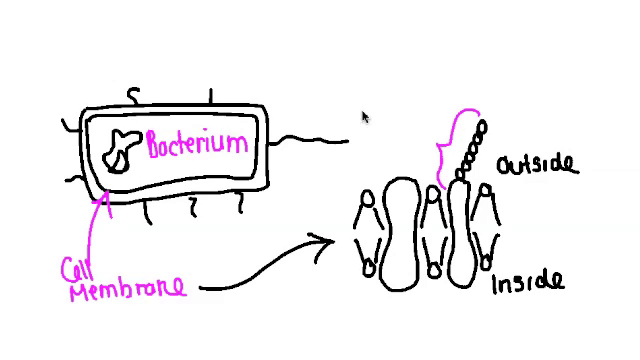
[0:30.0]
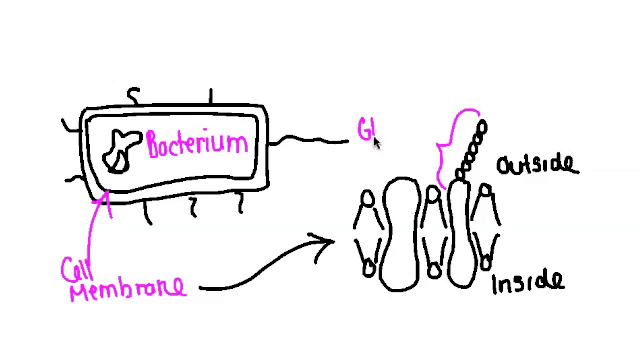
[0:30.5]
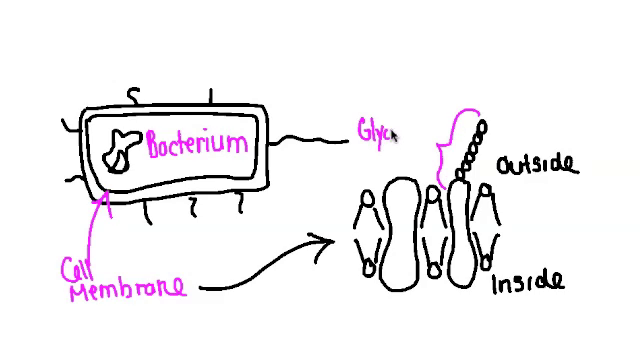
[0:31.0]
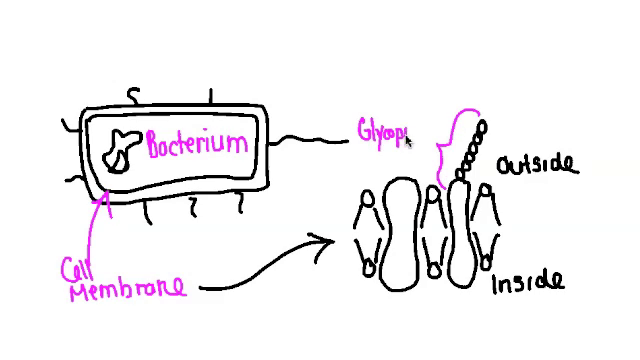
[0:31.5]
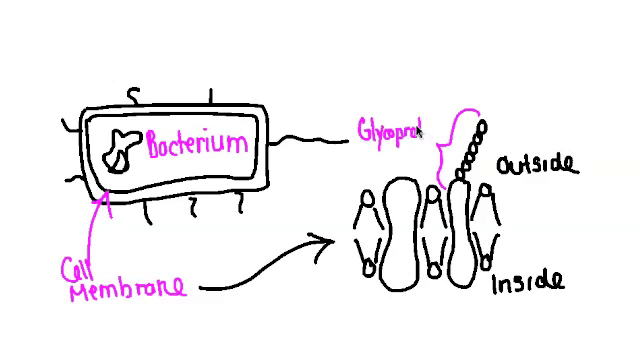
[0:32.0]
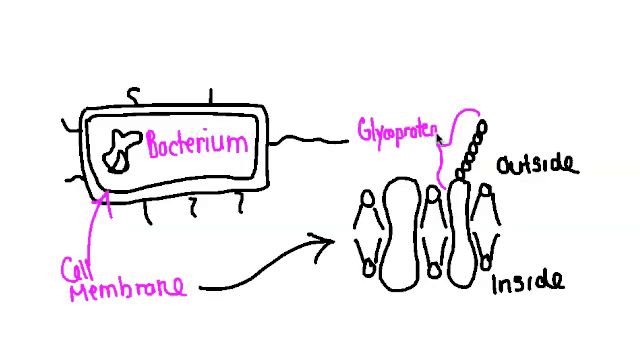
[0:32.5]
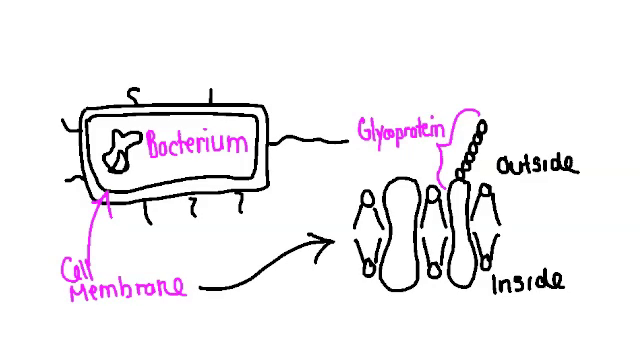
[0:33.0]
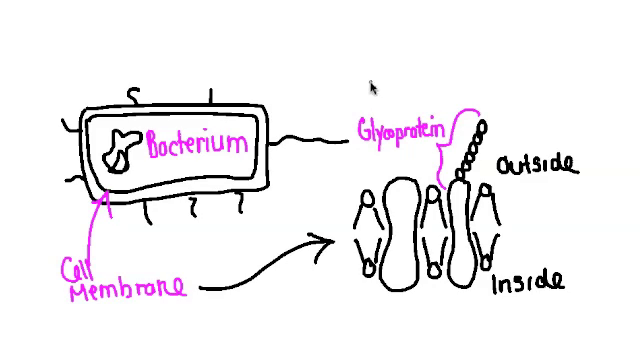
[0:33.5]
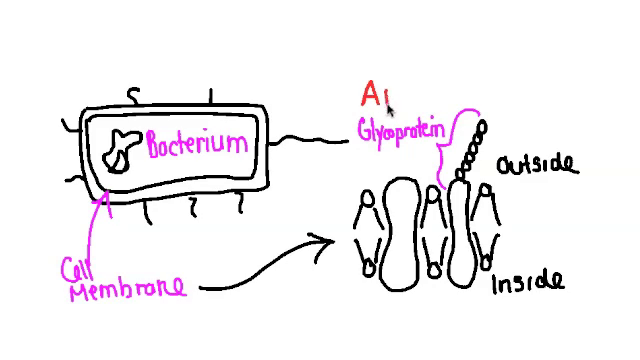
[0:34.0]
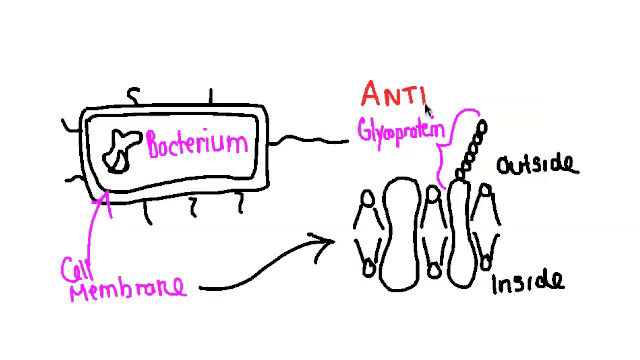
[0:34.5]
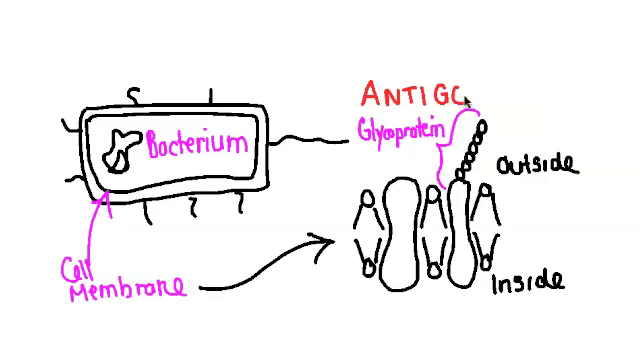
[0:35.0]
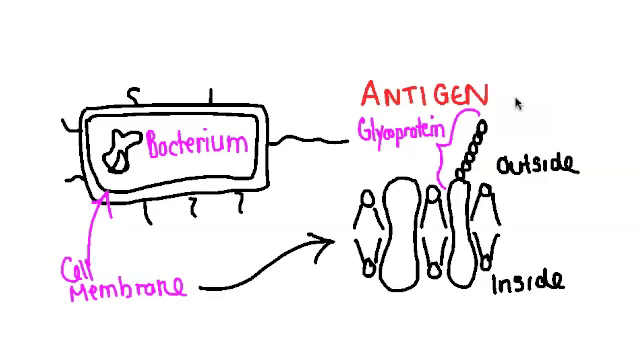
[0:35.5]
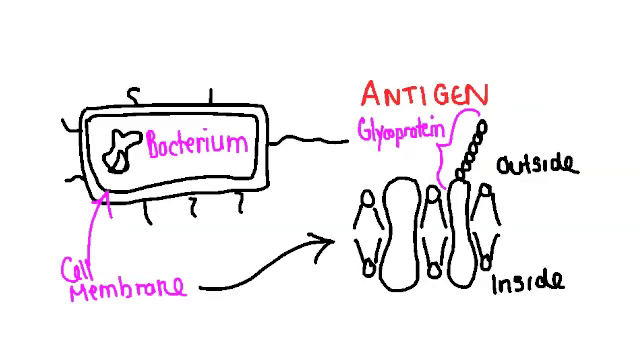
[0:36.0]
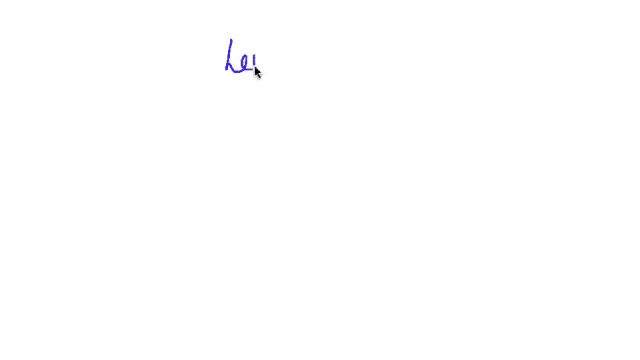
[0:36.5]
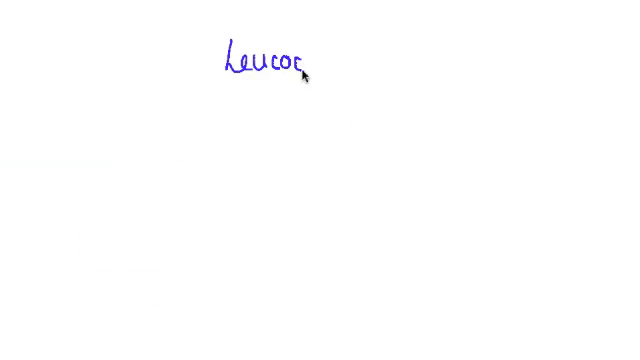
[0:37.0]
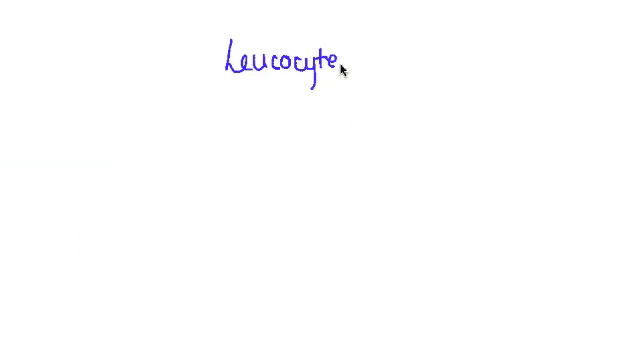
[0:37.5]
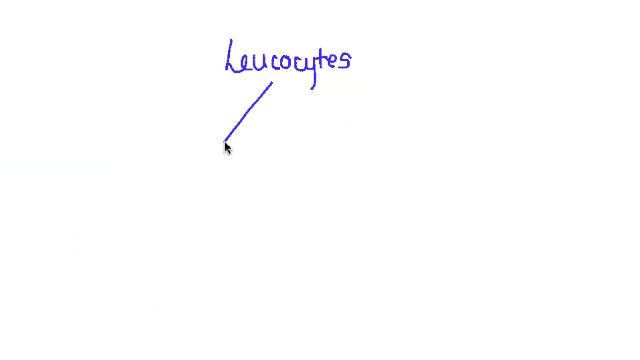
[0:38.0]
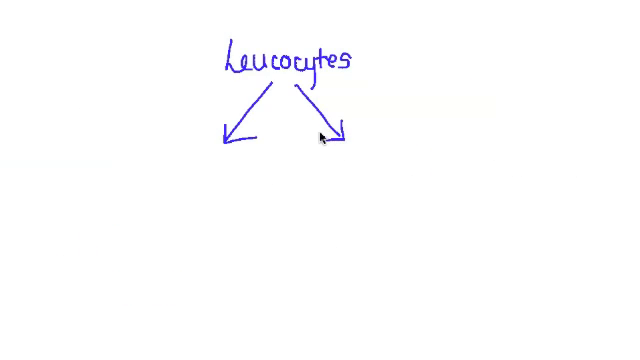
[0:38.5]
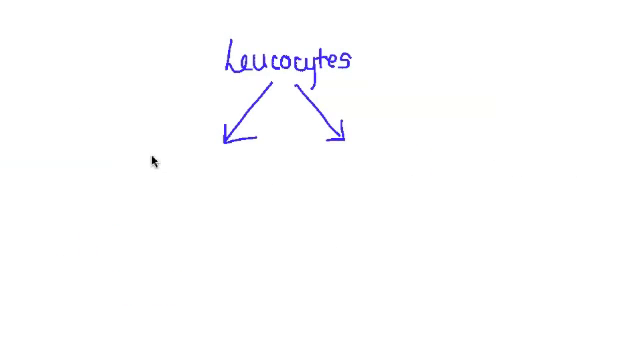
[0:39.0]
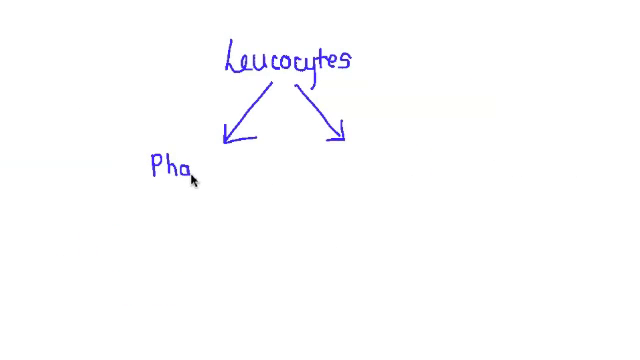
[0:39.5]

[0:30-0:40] The cell is shown with "bacterium" in pink, and "cell membrane" is written with an arrow pointing up to the drawn cell, which has "bacterium" in it. To the right of the bacterium cell, "glyoprotein" is written in pink, and a dash is drawn around the drawings of the almost-connected V's on the right. Above "glyoprotein", "antigen" is written in red. On the next screen, "LEUCOCYDES" is written in blue, with two blue arrows pointing diagonally down, one to the left and one to the right. Blue writing looks like it is starting underneath the left arrow, beginning with a P.